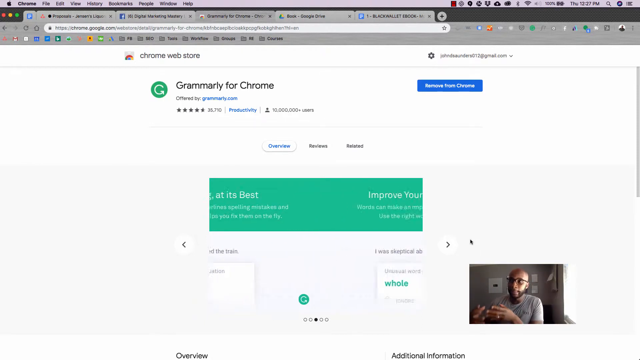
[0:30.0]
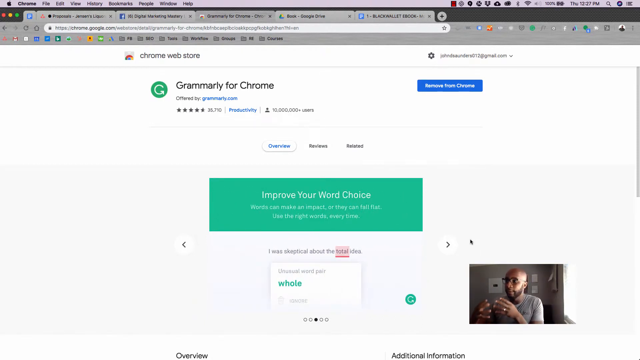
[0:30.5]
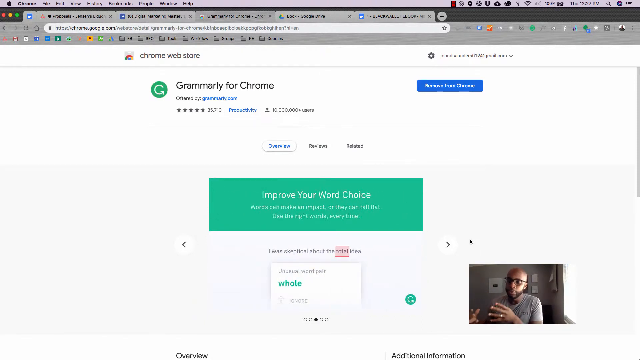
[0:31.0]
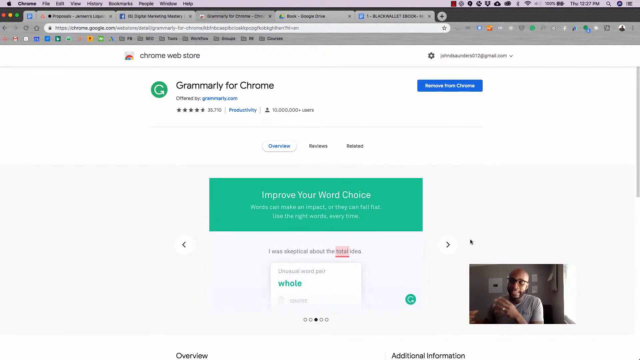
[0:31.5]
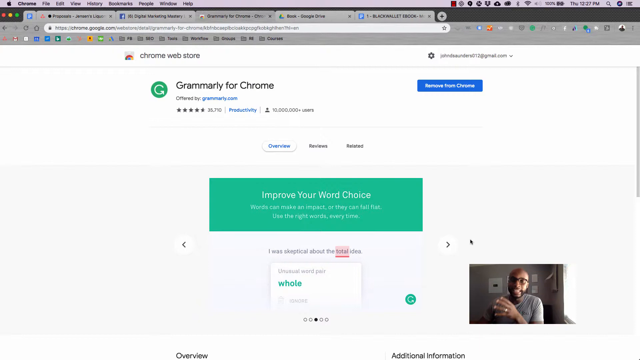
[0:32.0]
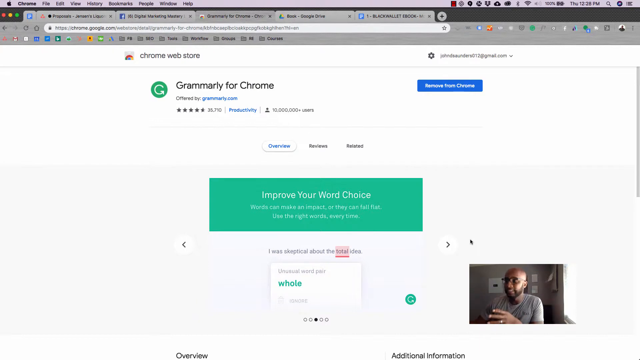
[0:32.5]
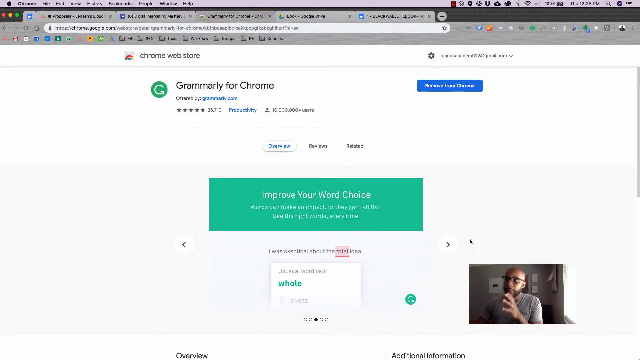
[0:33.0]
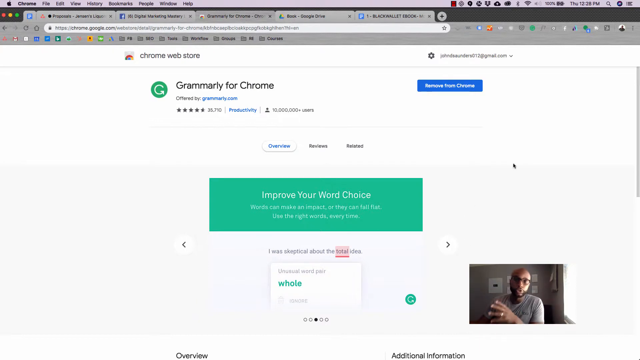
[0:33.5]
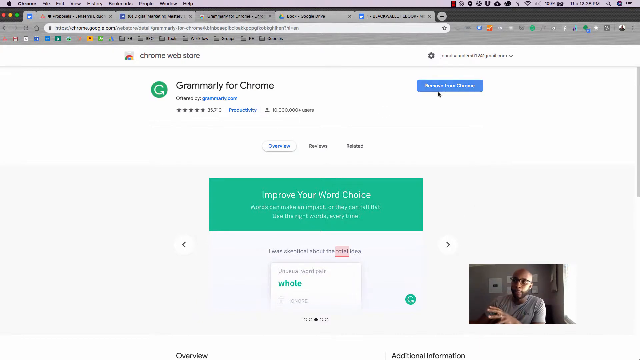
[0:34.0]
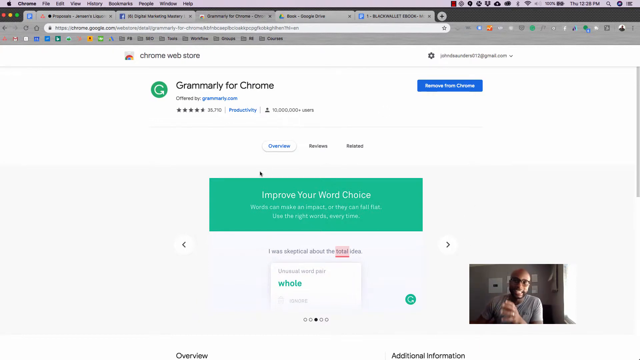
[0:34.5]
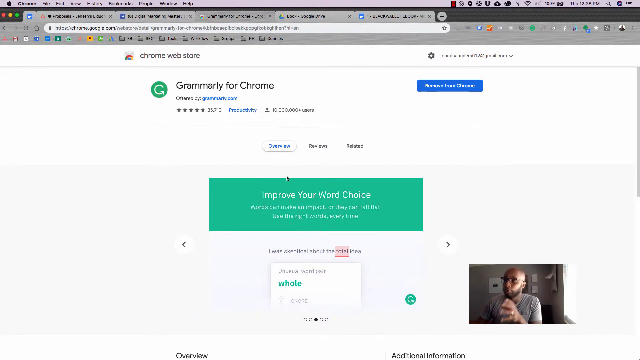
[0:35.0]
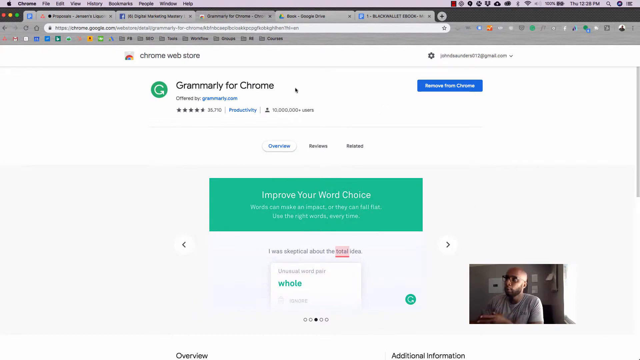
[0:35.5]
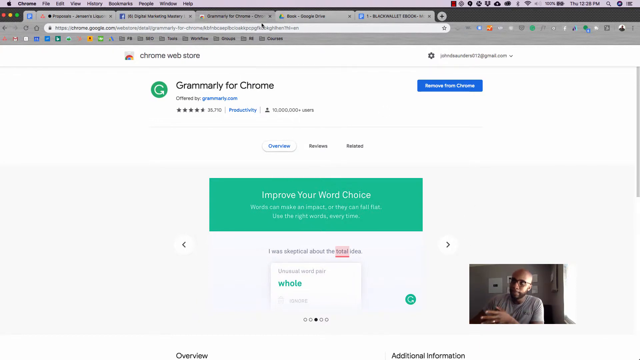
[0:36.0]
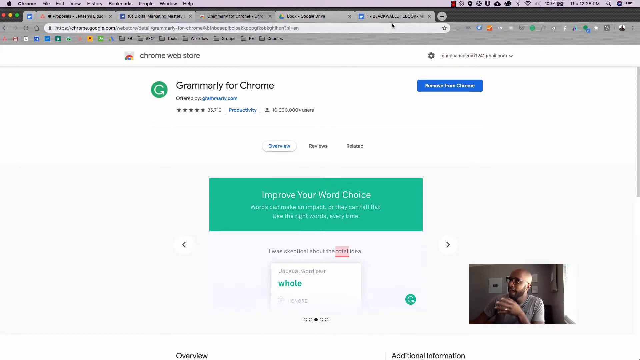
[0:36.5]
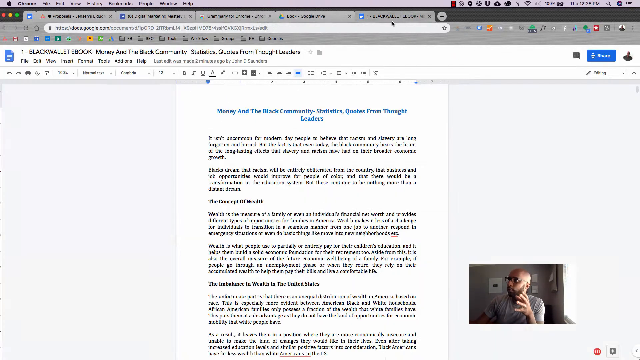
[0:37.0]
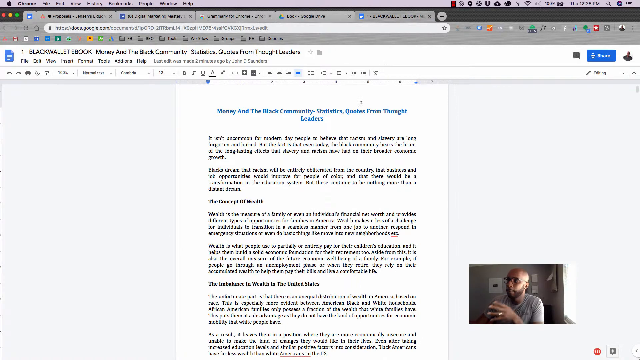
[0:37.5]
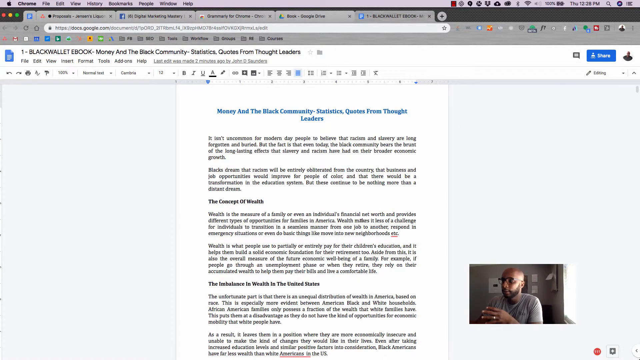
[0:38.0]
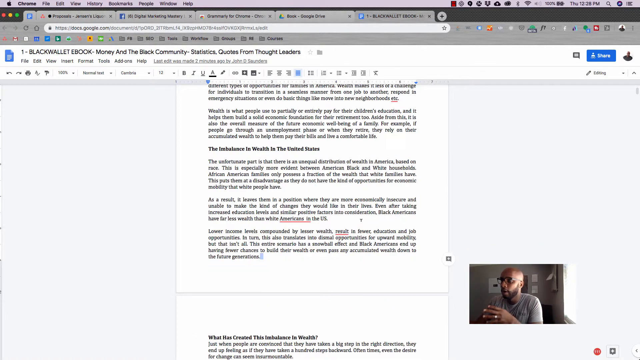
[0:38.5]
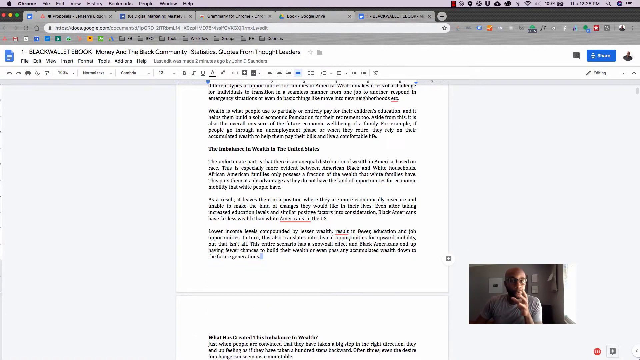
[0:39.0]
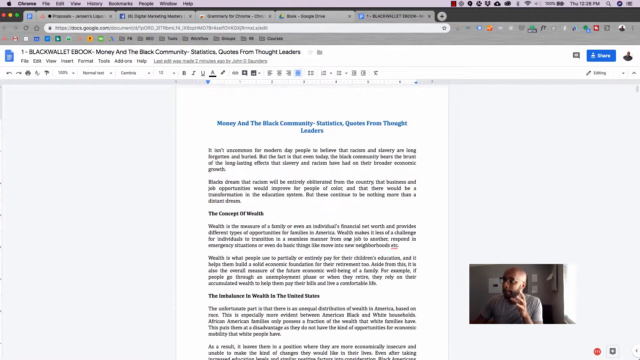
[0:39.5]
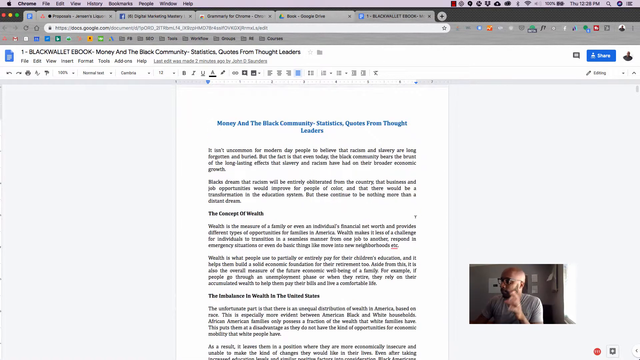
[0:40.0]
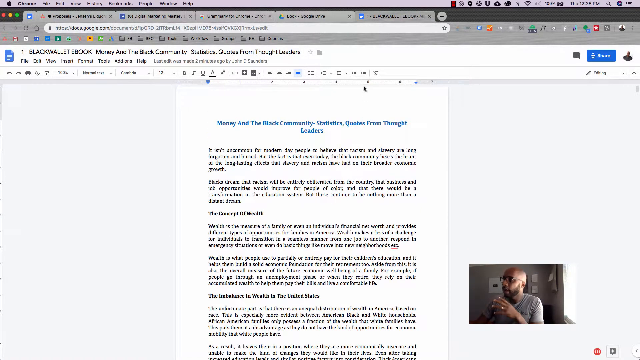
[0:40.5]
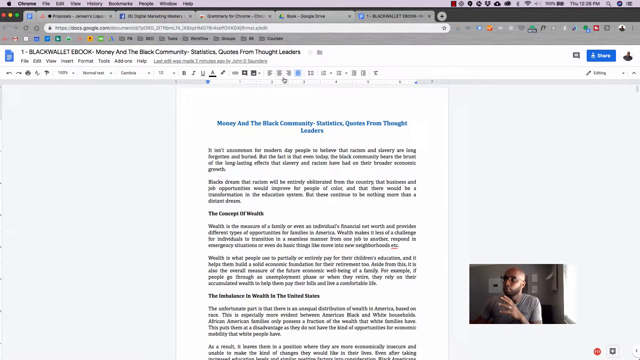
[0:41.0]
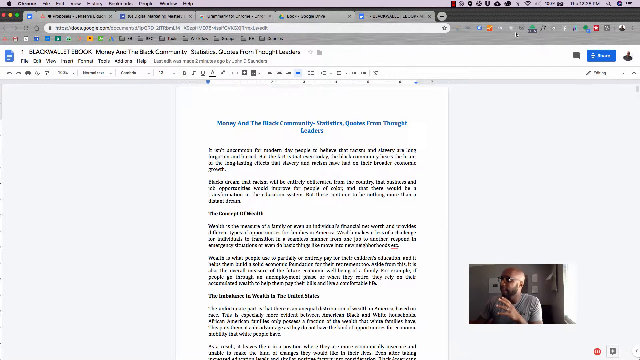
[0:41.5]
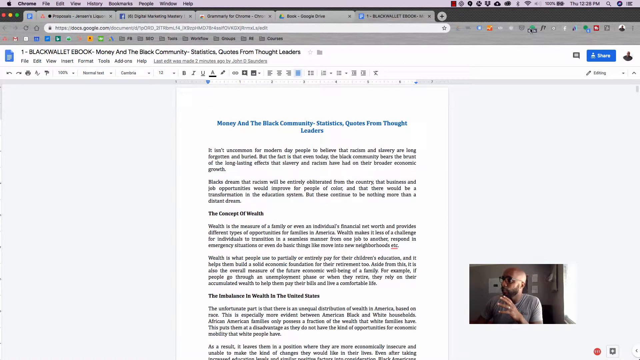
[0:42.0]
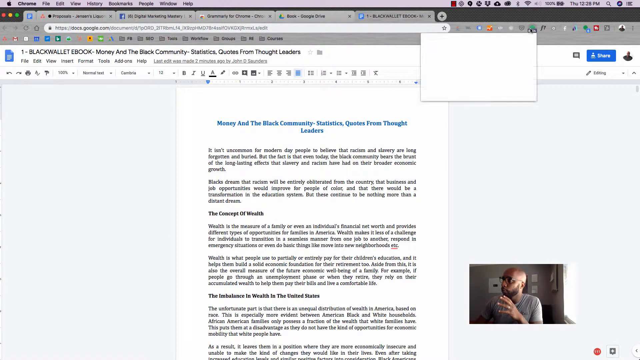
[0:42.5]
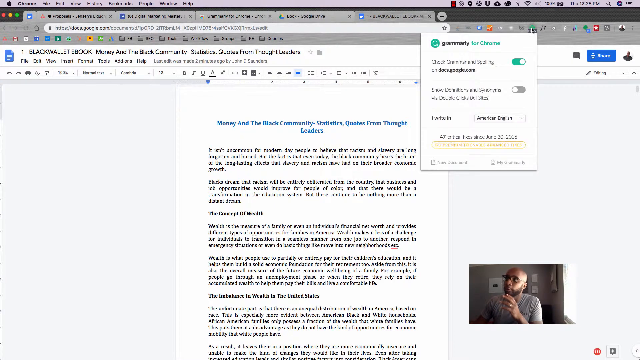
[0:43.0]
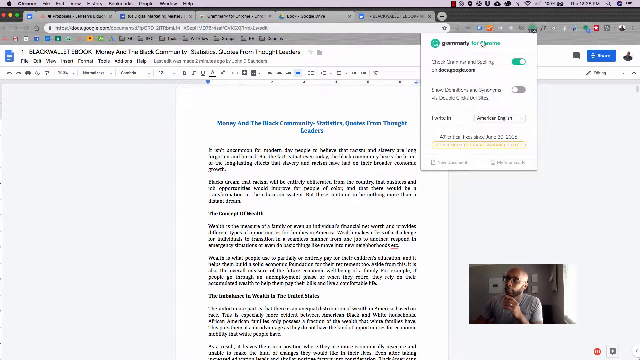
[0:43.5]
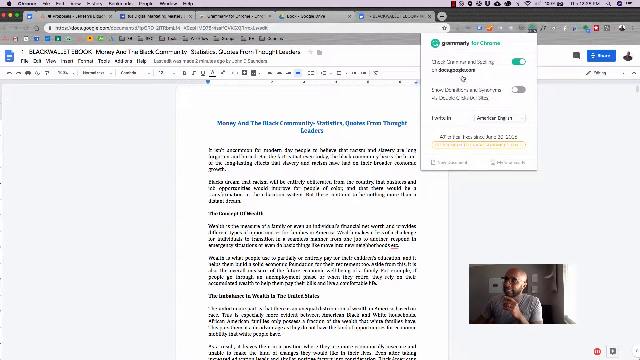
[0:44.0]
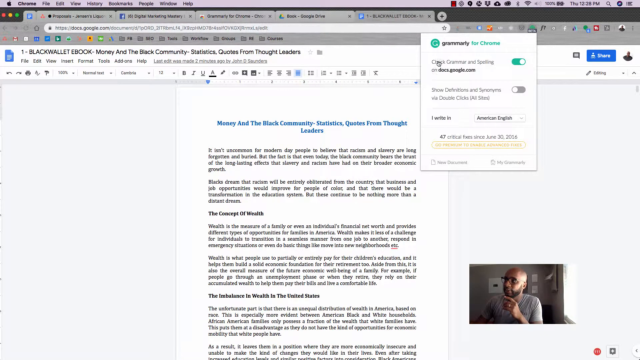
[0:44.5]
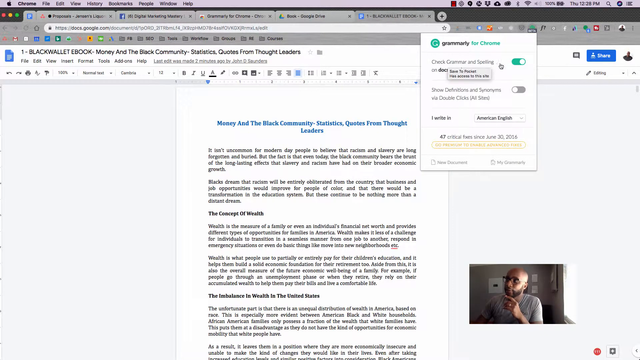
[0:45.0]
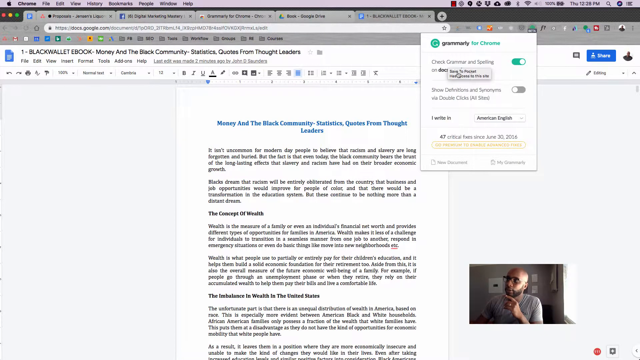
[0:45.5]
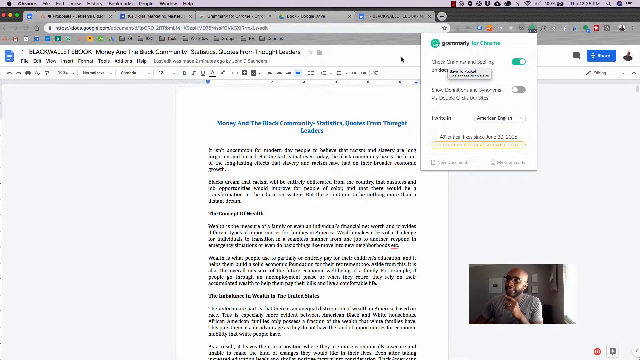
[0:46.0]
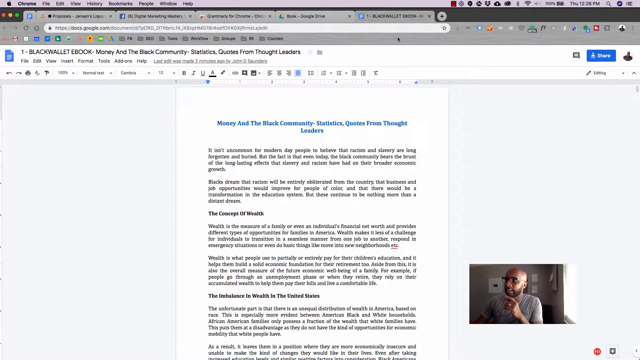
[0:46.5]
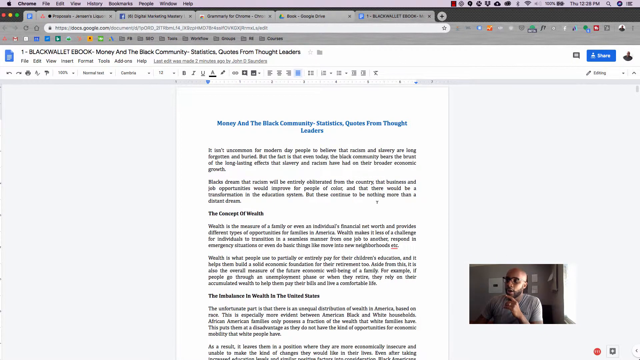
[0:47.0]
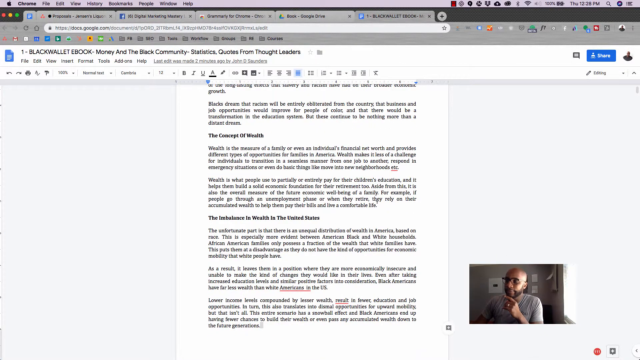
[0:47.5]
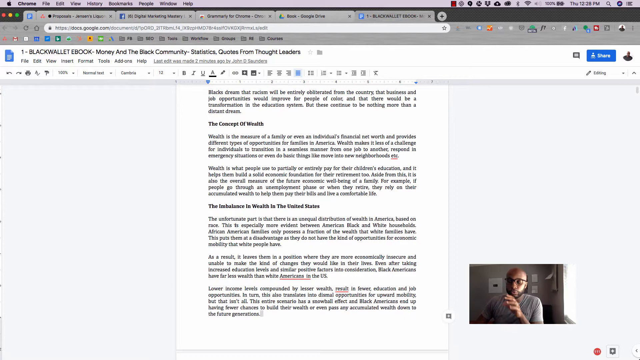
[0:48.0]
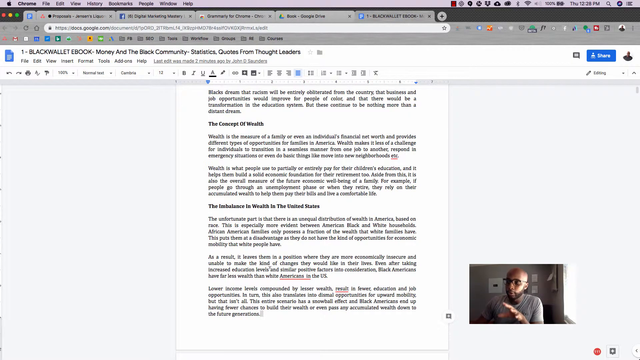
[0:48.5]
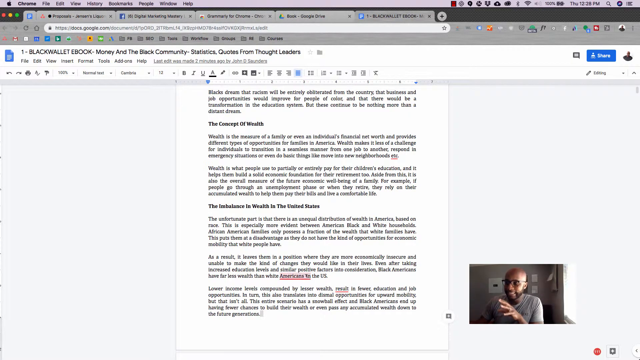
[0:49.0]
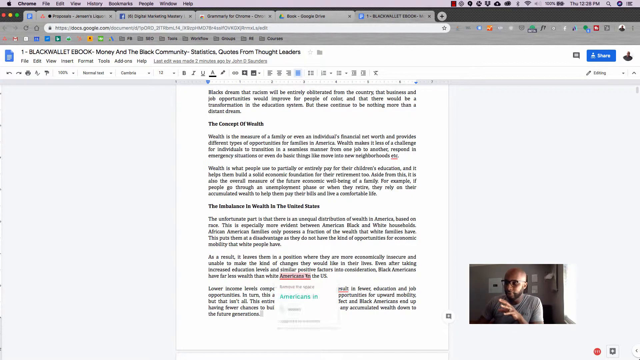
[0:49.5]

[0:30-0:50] In the Chrome browser, the man, who is recording himself, goes into a document he has written, clicks the extension button and activates it. Once active, it shows that some words in the document can be changed into other words. The Grammarly extension menu offers options such as showing definitions and synonyms via double click and checking grammar and spelling on docs.google.com, the site he is on. There is also an option to select the place of origin from the languages, which changes the way the extension works.